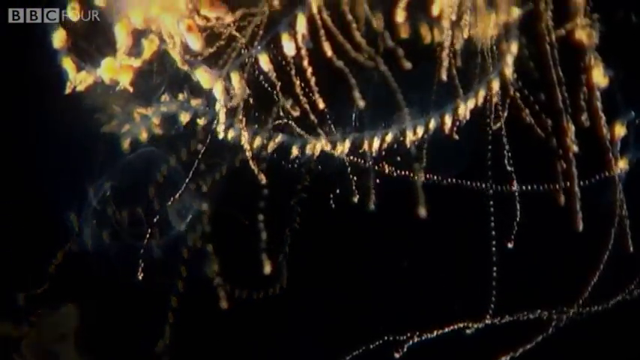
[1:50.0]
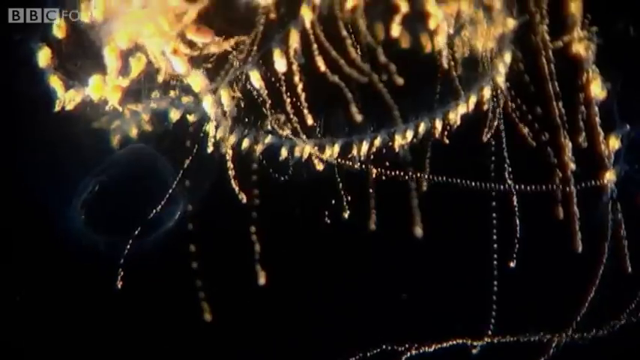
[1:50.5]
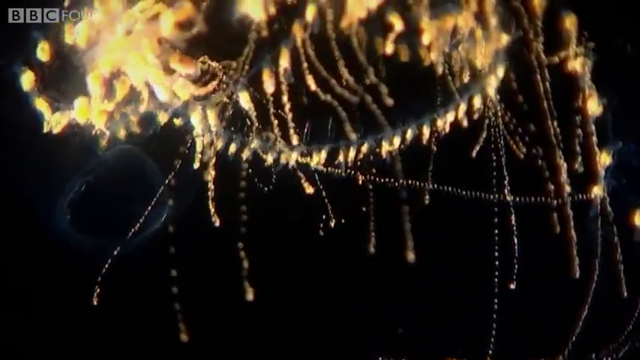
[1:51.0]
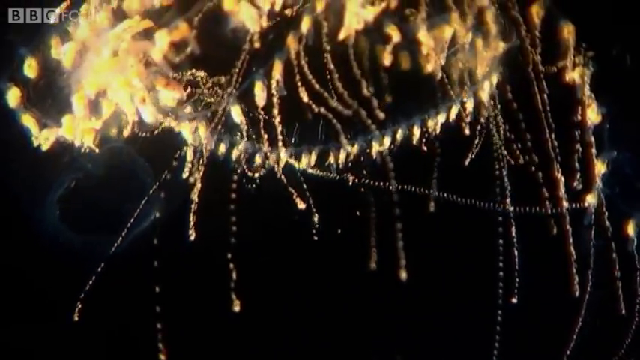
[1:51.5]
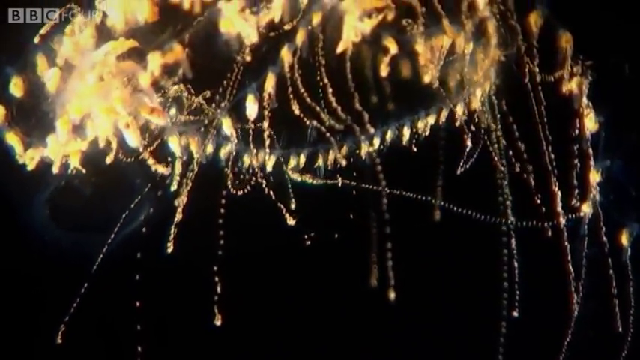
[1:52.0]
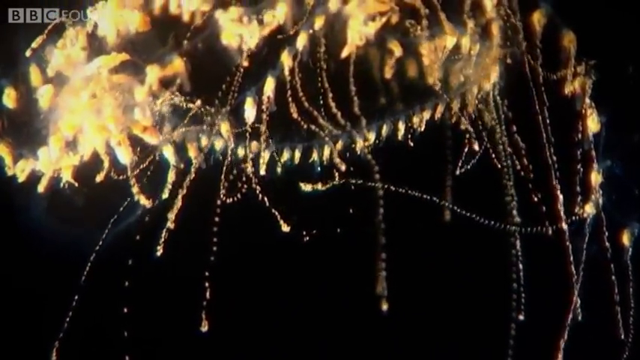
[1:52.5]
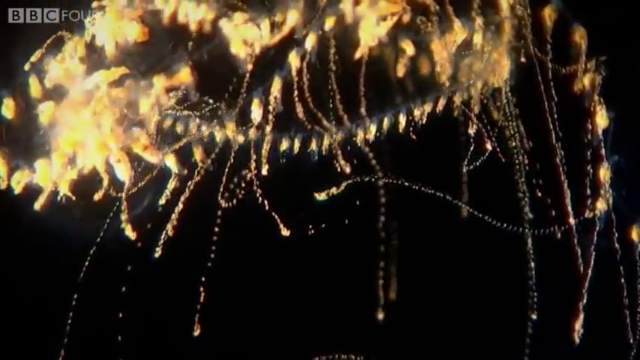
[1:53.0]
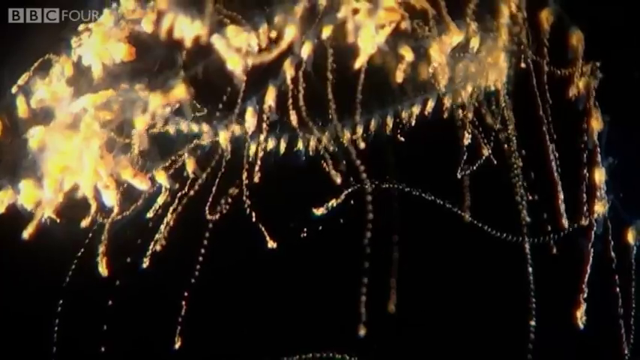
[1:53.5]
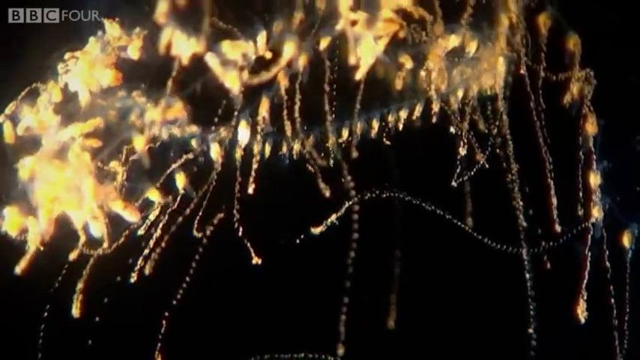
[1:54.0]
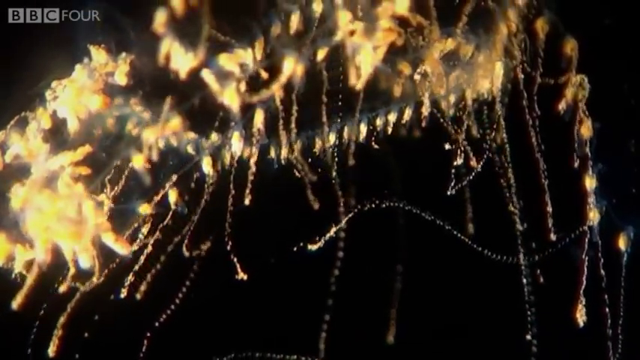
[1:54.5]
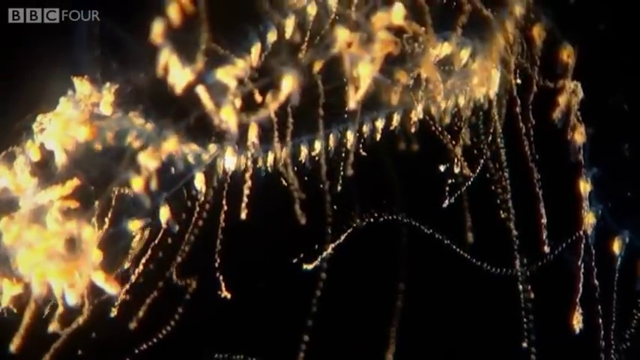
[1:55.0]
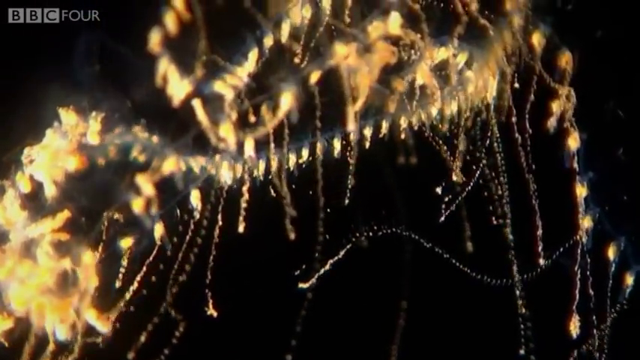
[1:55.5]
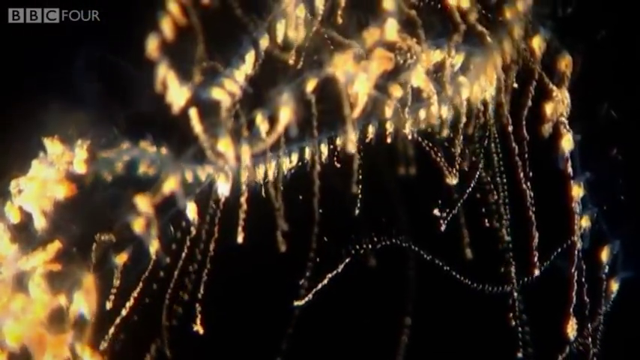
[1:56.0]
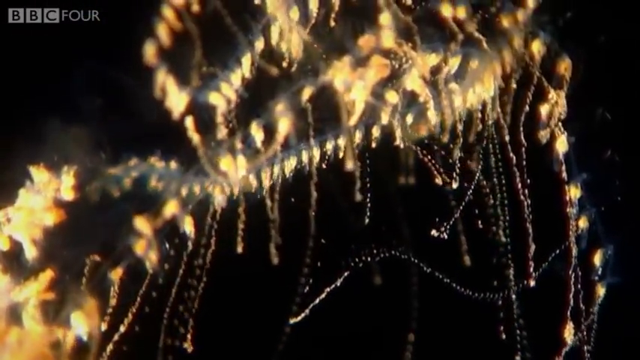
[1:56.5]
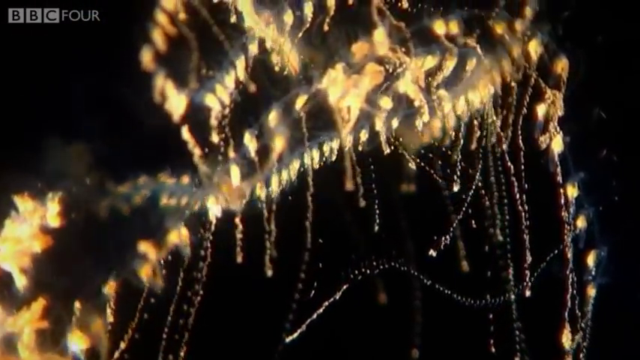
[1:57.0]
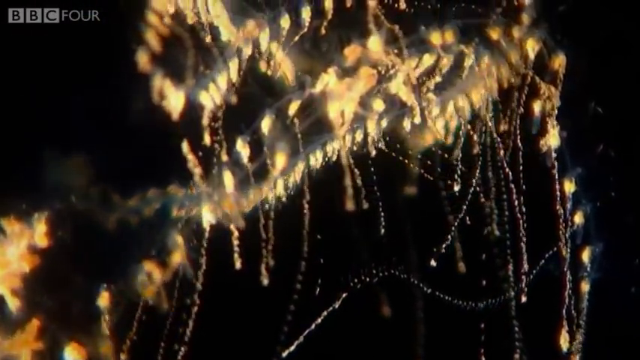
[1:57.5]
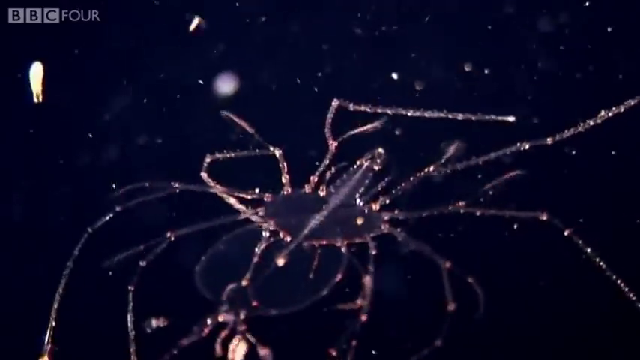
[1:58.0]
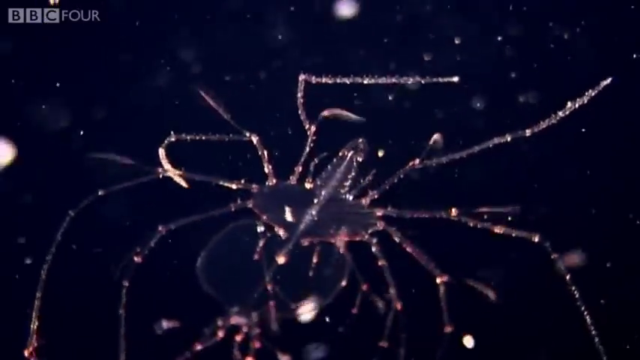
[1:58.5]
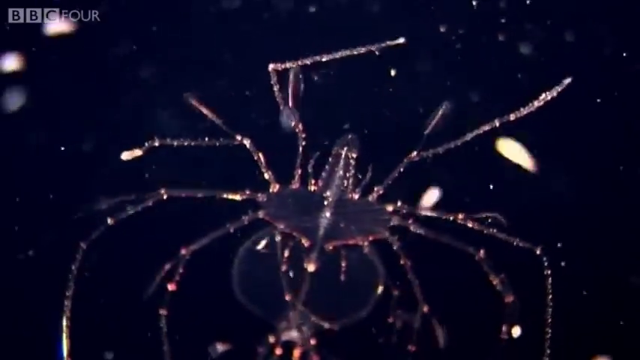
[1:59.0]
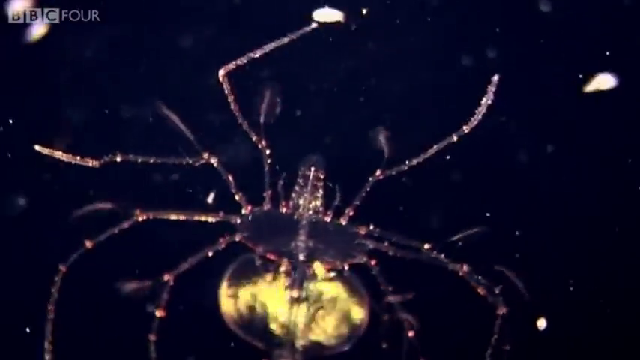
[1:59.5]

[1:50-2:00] Various deep-sea creatures are shown, most of them see-through and bioluminescent. The first is yellowish, with dozens of tentacles hanging off its body, and it seems to simply float through the water, letting the currents carry it. The next is outlined in red bioluminescence and looks like a large spider. It slowly moves its legs or tentacles, kind of propelling itself through the water, and the ocean currents seem to be doing a lot to move these creatures around. This spider-like creature has several legs that resemble a spider's, and its body appears translucent or partially see-through and looks very flat.